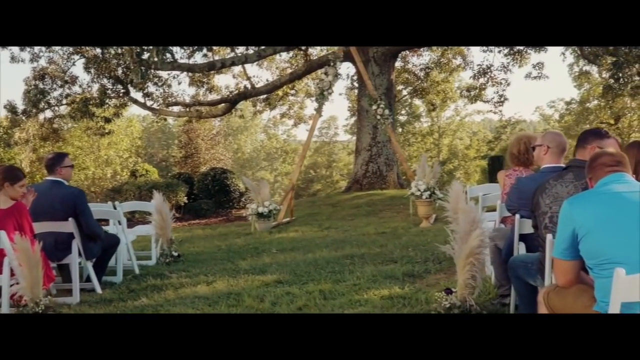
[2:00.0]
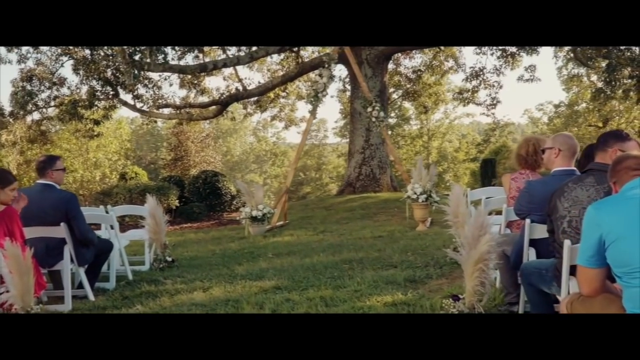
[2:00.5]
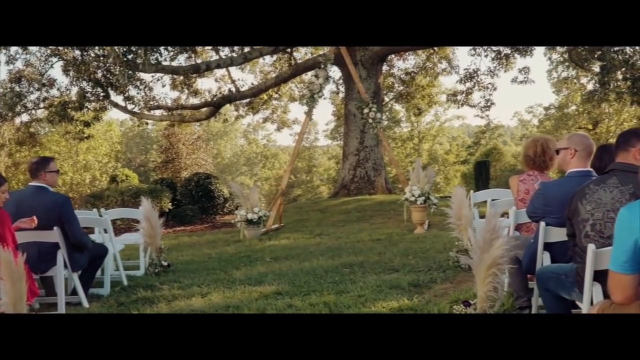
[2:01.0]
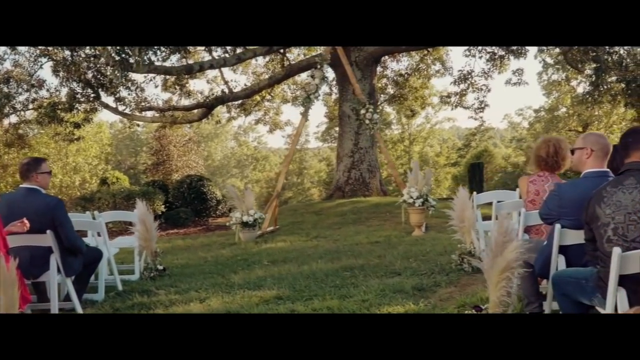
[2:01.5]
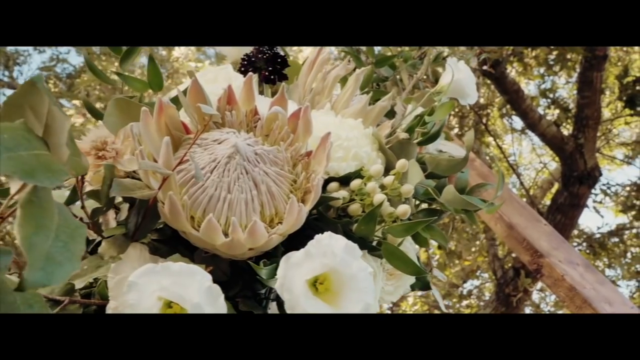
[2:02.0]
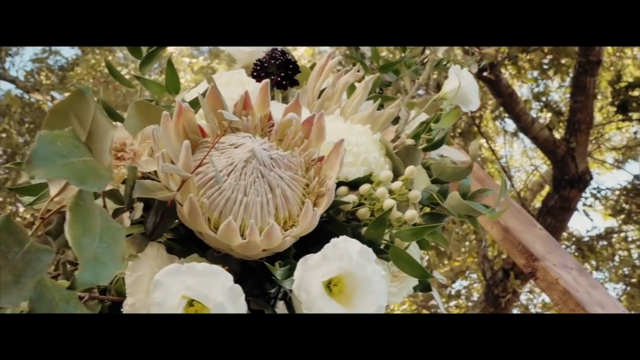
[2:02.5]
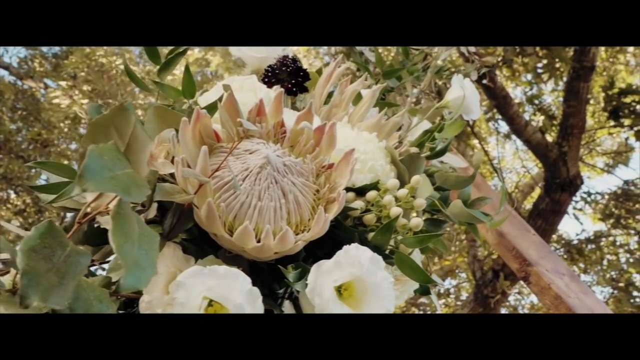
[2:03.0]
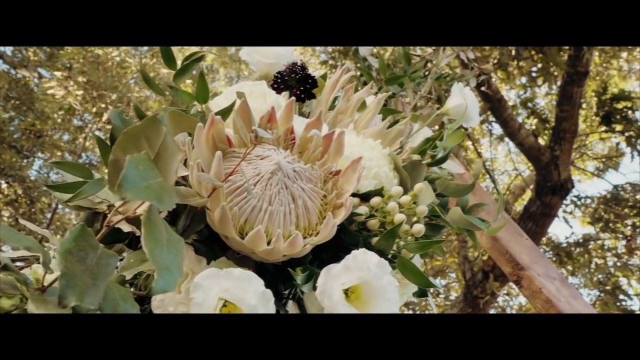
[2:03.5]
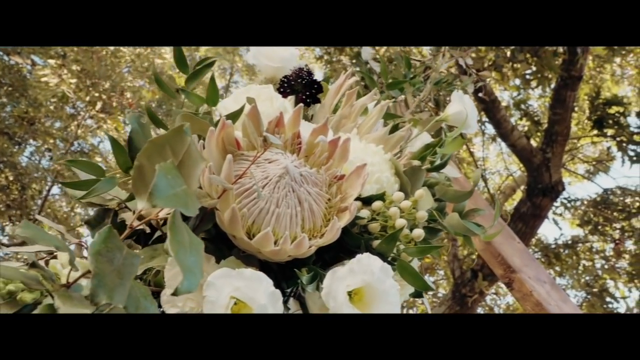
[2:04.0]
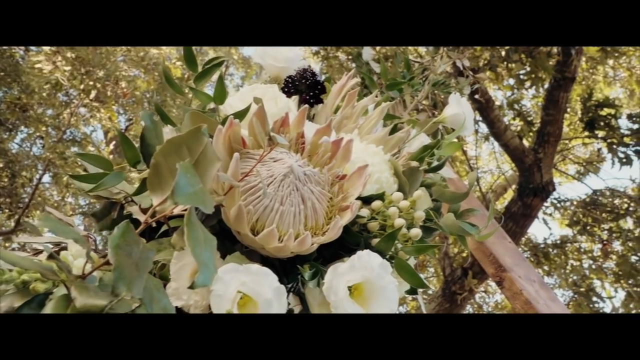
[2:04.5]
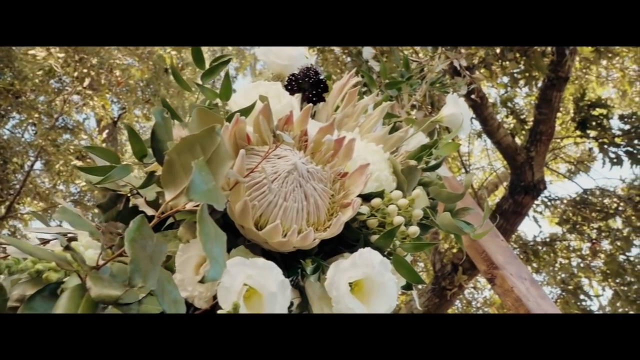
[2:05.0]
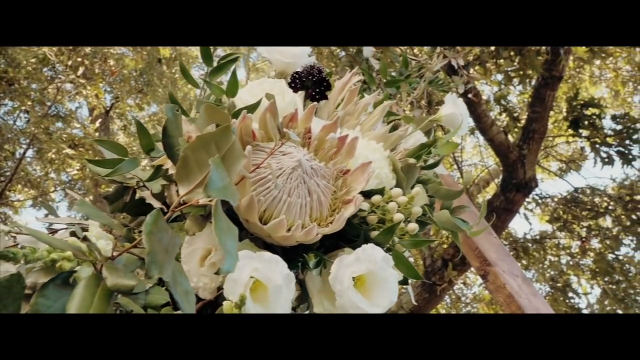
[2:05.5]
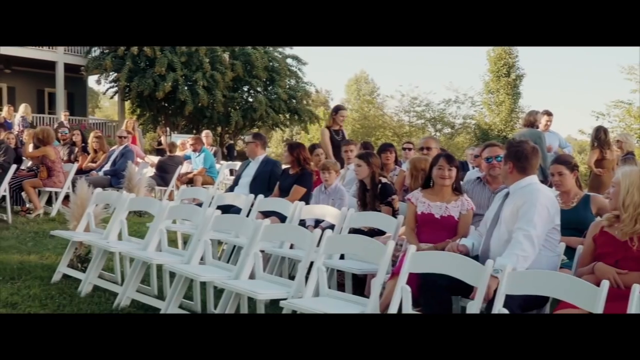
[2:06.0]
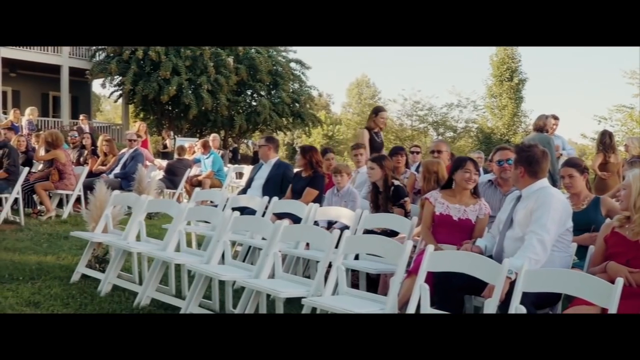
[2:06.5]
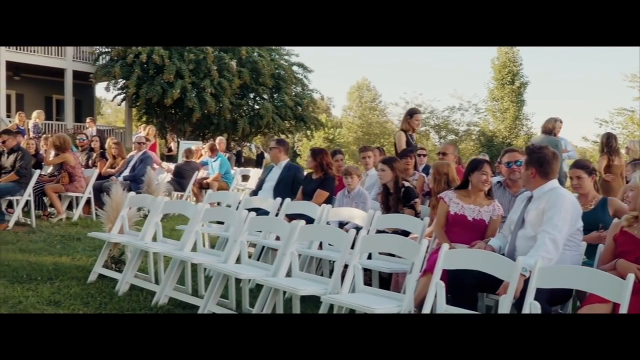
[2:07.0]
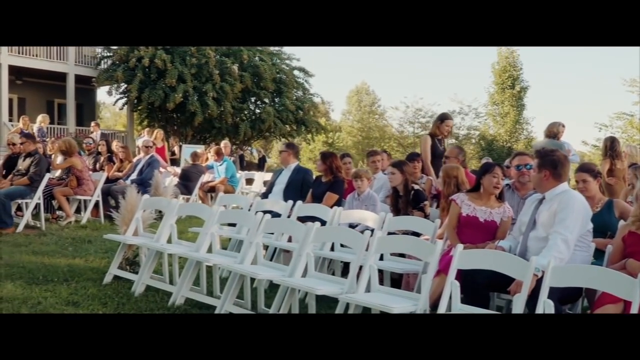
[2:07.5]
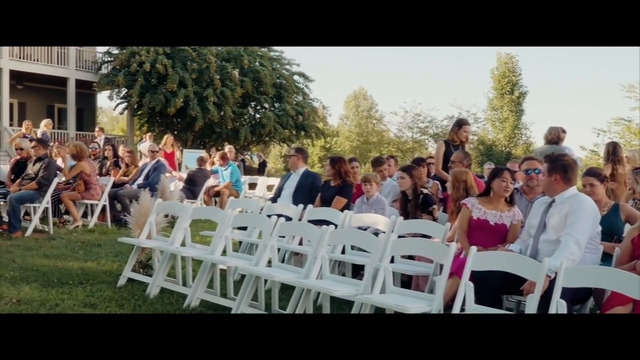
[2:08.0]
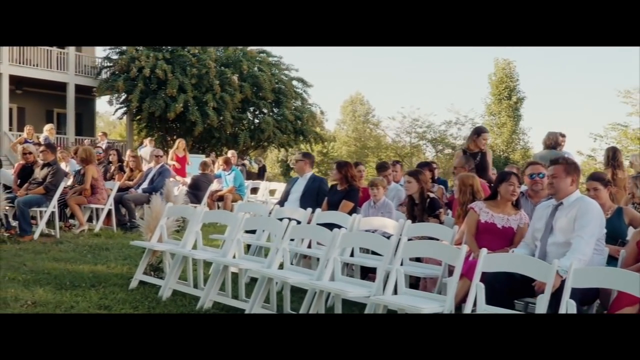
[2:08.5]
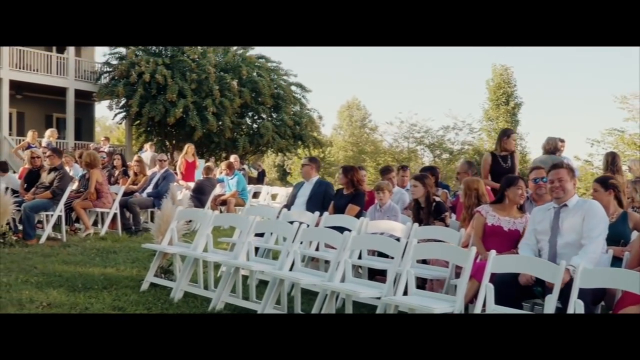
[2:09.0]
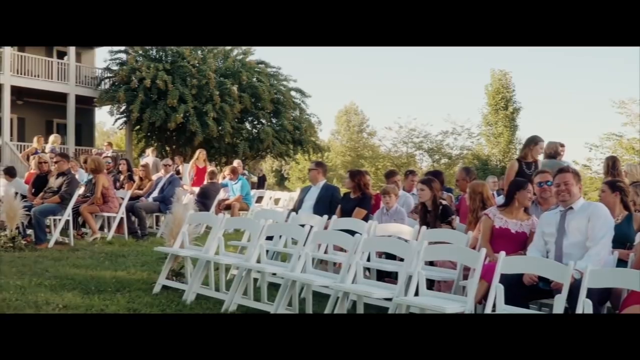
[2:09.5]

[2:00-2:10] At the altar, the cameraman walks and films scenes of the venue; some people are trying to get seated and some chairs are empty. A shot of the altar shows kids sitting on both sides of the area. The camera shows what looks like a potato tree and then goes below the flower. A view from the front of the altar shows kids sitting in their seats; the front row is completely empty, and some kids are standing in their seats at the rear.